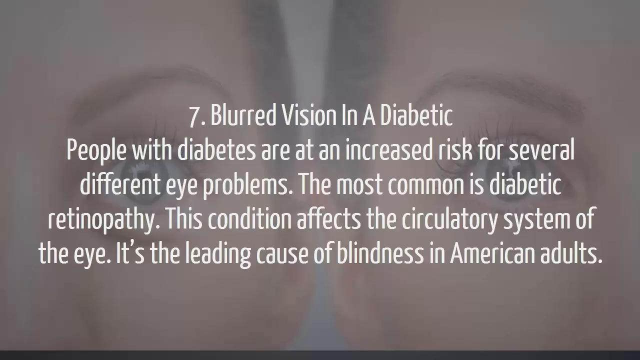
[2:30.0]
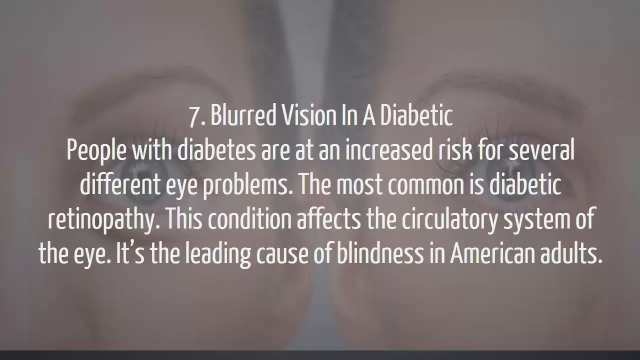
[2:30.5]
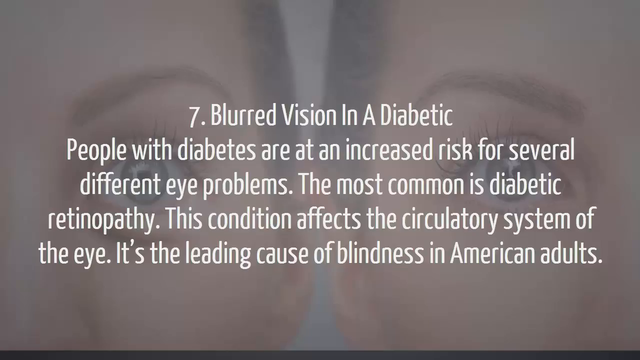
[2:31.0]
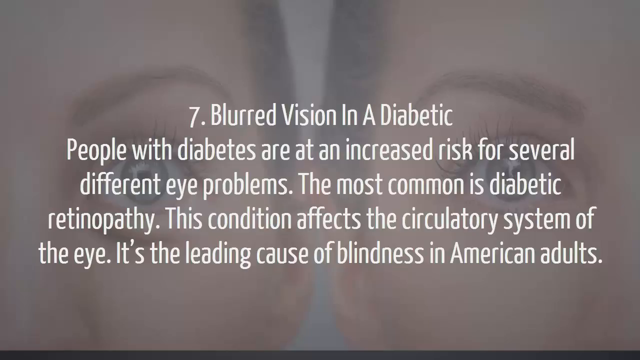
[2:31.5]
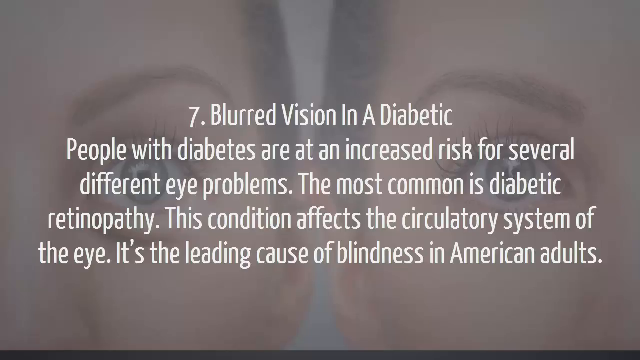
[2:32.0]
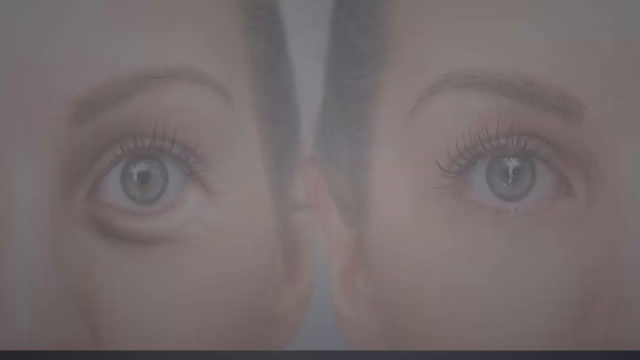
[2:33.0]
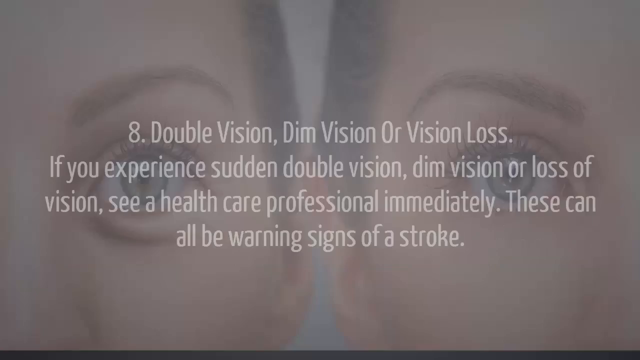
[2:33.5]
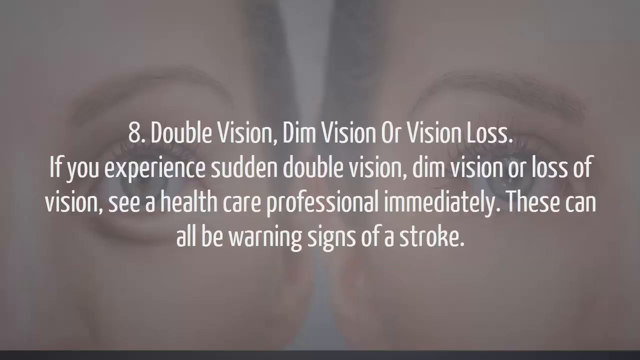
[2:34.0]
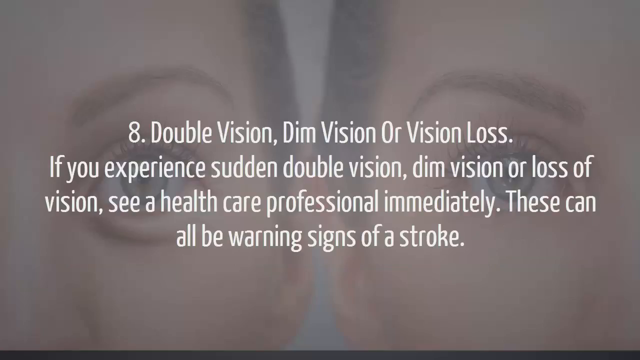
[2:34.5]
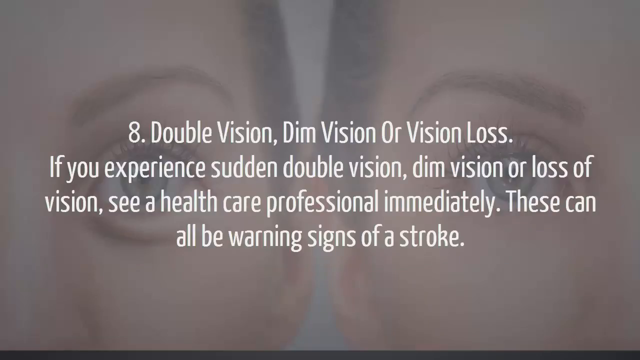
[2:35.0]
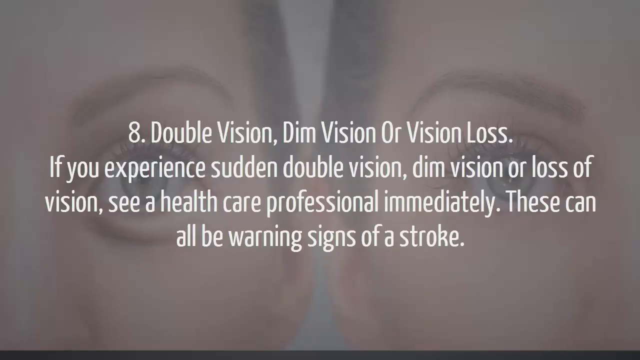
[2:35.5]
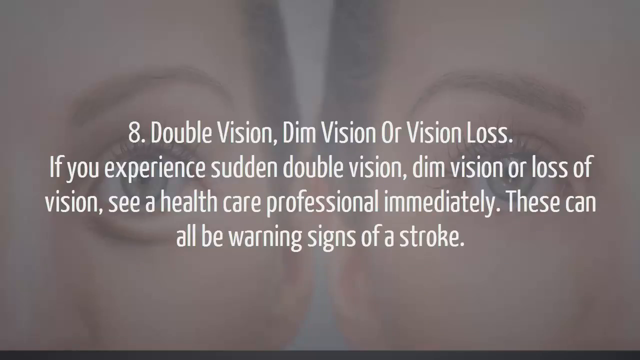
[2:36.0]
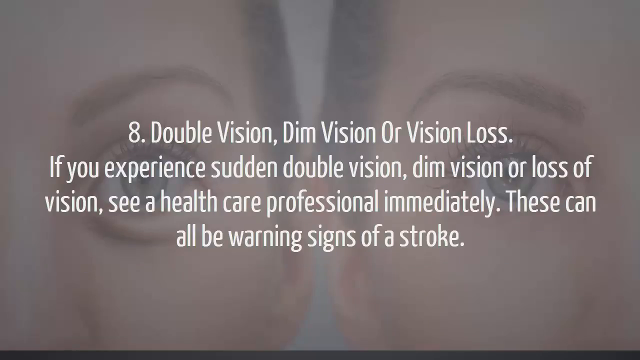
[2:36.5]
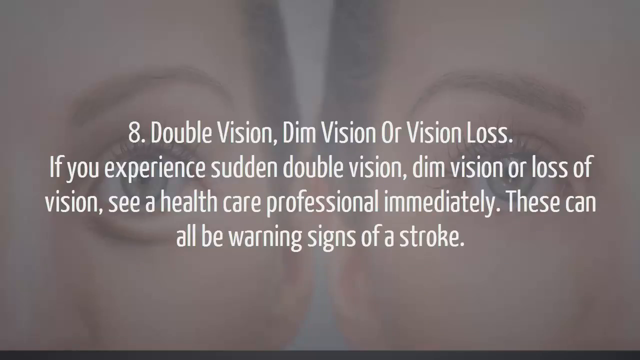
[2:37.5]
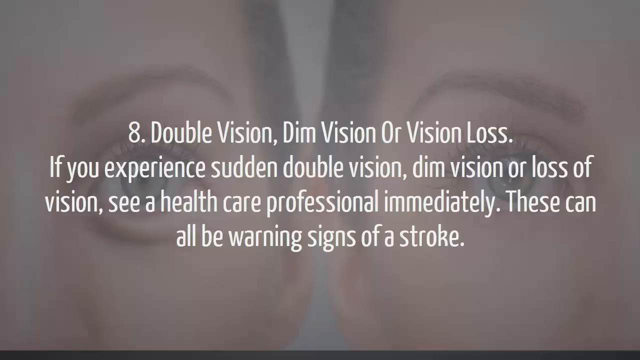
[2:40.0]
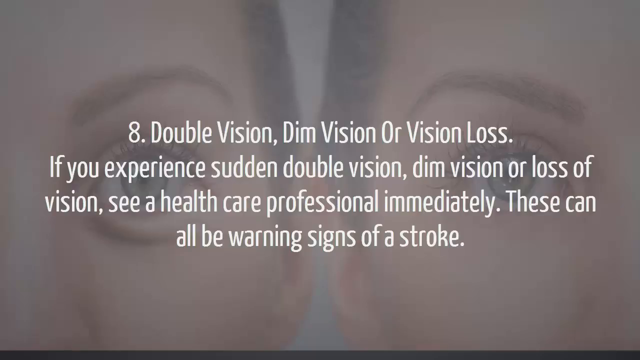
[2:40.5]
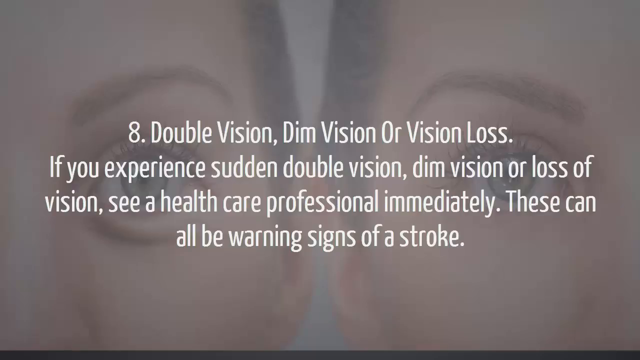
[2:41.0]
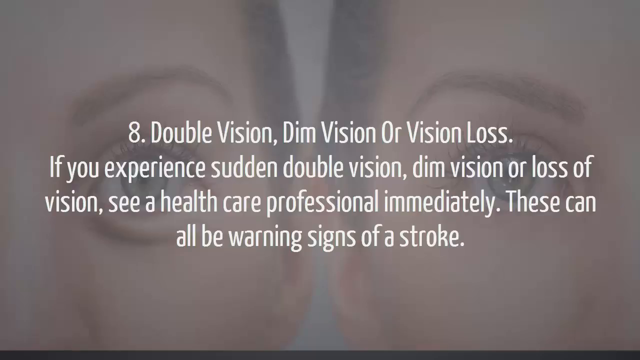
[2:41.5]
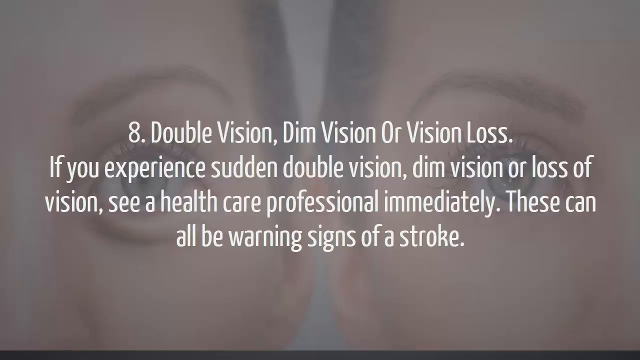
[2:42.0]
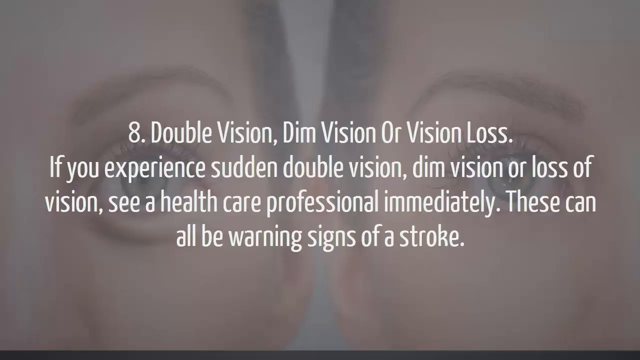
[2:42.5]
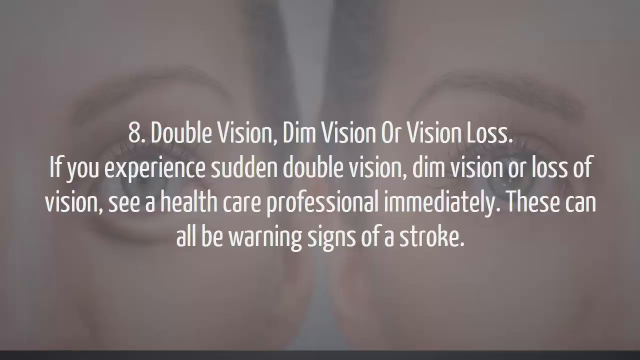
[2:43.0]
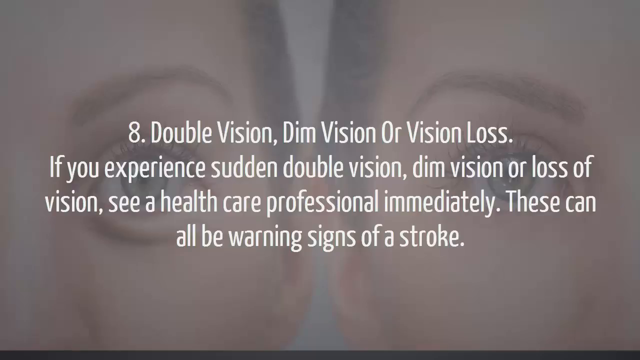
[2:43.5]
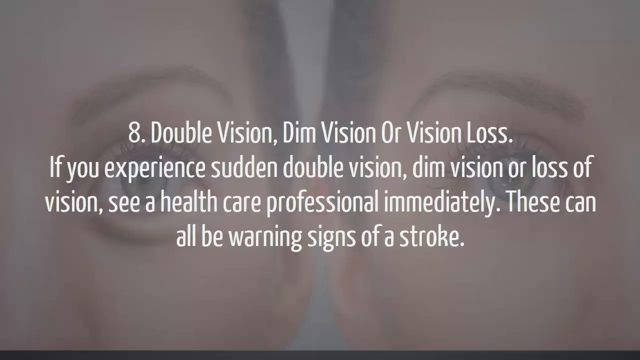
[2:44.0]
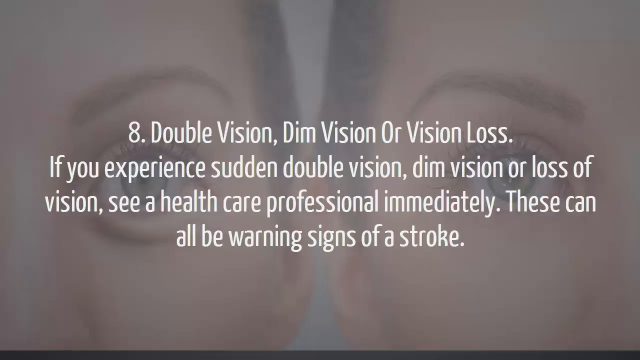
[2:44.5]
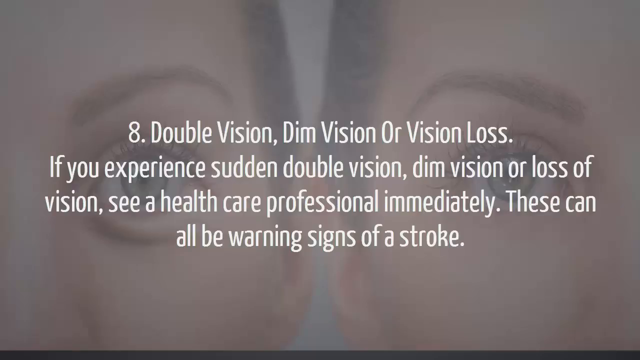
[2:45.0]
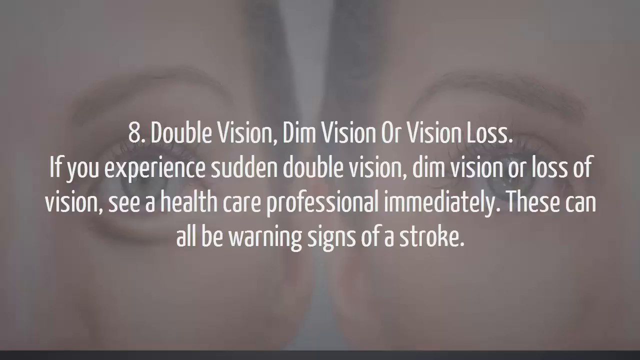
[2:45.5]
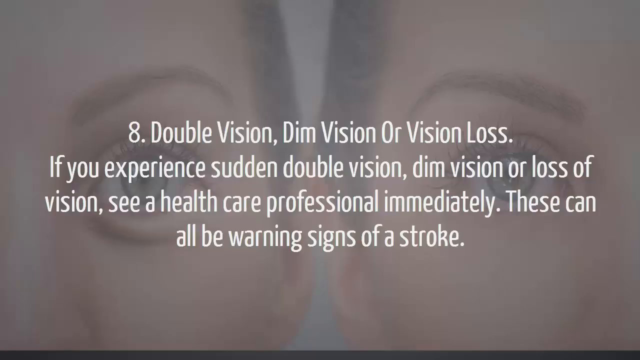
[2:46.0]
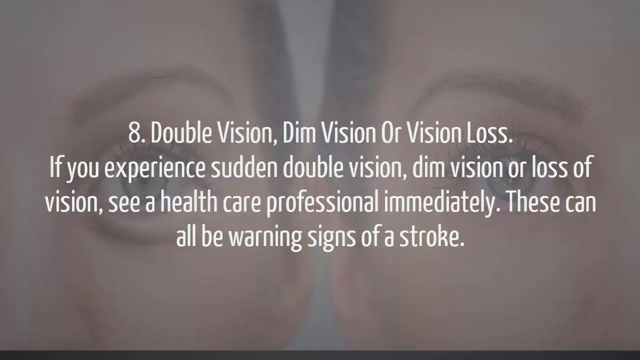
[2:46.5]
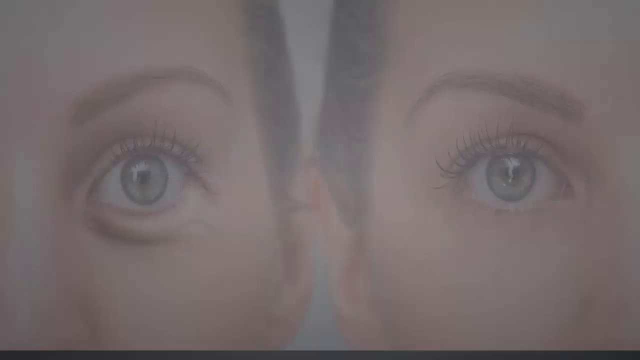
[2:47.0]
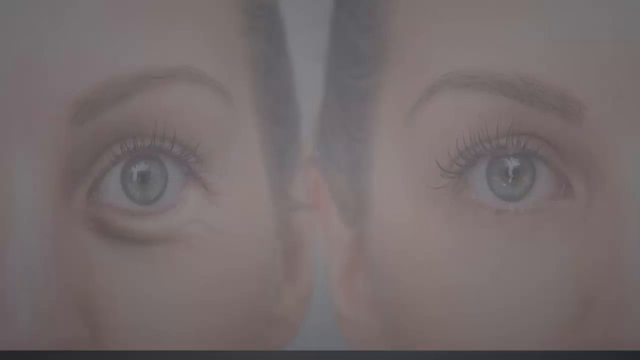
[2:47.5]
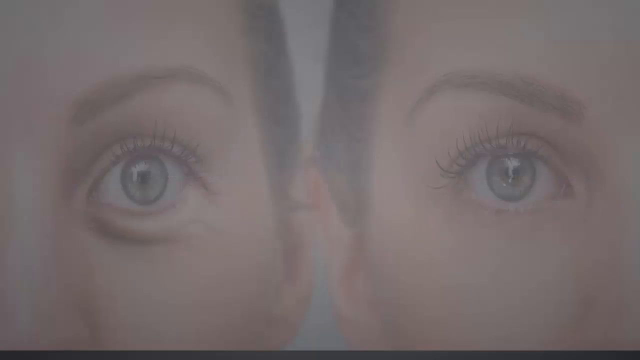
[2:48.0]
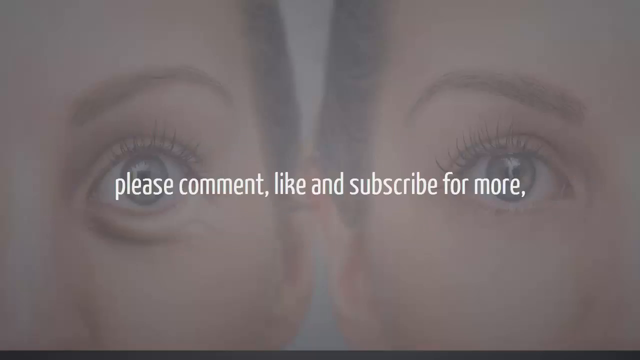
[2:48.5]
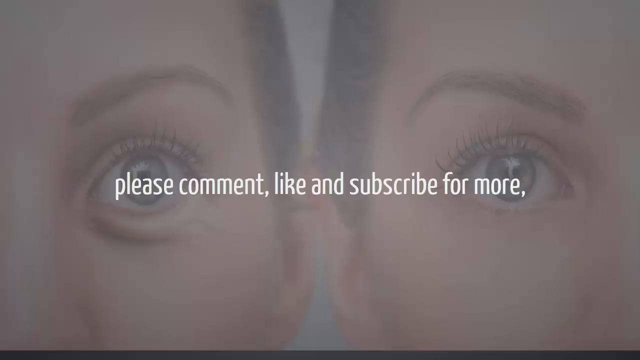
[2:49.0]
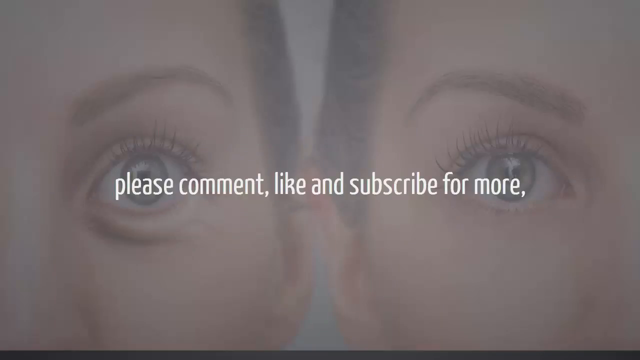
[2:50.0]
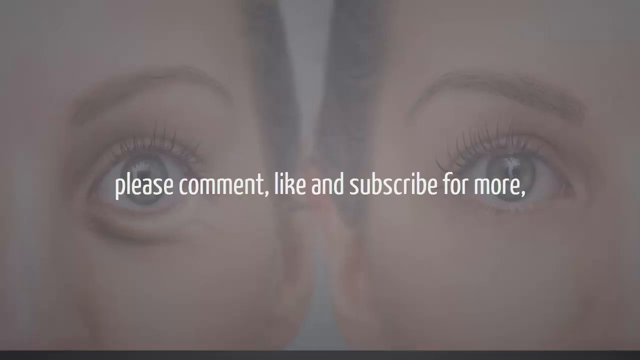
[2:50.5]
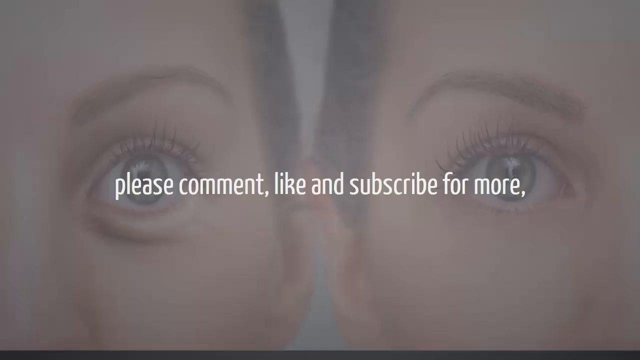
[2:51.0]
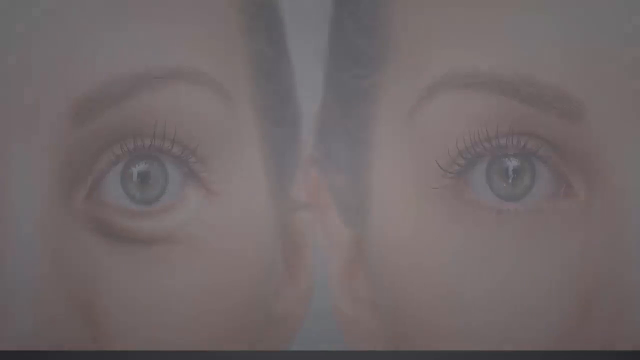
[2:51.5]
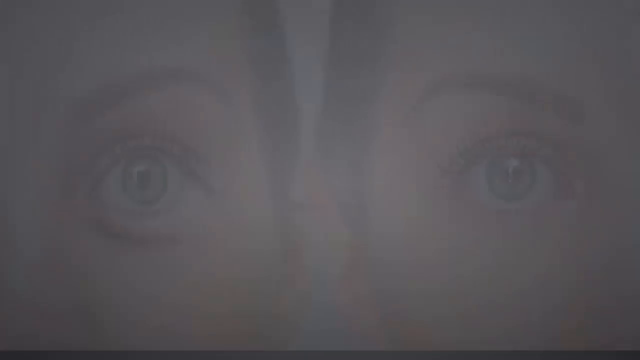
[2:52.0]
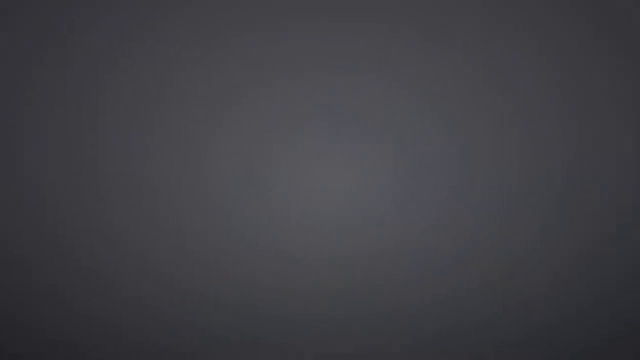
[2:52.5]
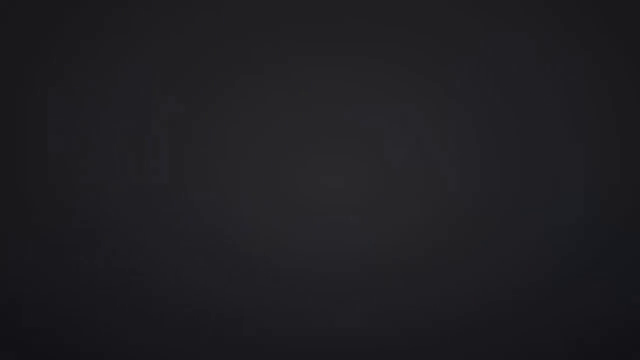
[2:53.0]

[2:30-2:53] A number seven is on the screen with text reading: "Blurred vision in a diabetic. People with diabetes are at an increased risk of several different eye problems. The most common is diabetic retinopathy. This condition affects the circulatory system of the eye. It's the leading cause of blindness in American adults." The video then switches to number eight: "Eight, double vision, dim vision or vision loss. If you experience sudden double vision, dim vision or loss of vision, see a healthcare professional immediately. These can all be warning signs of a stroke." At the end of the video, text reads: "Please comment, like, and subscribe for more." In the background are two people, one on the right and one on the left, with each face visible only from the middle of the nose over to the ear.